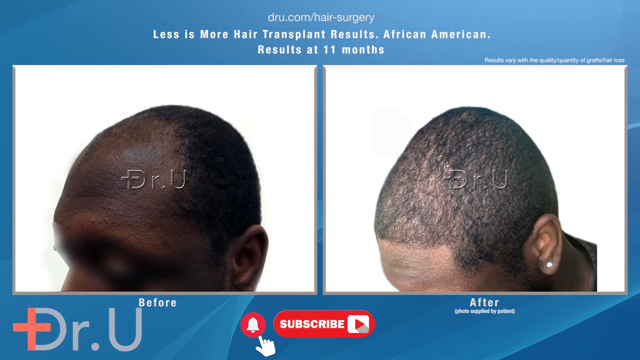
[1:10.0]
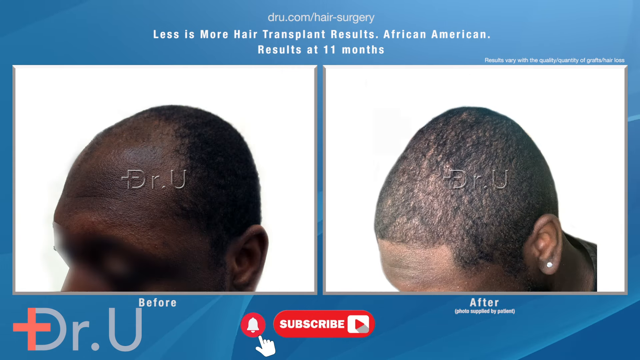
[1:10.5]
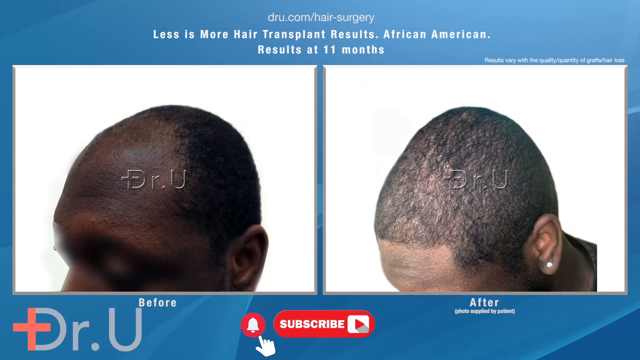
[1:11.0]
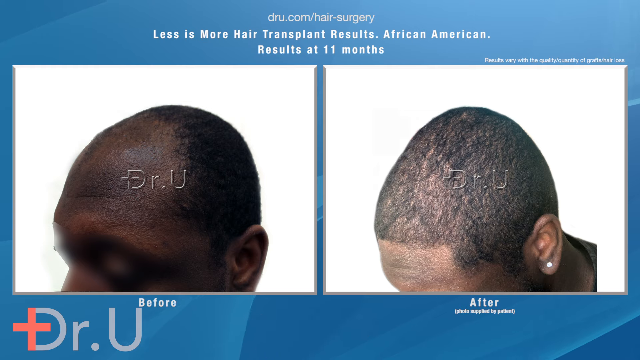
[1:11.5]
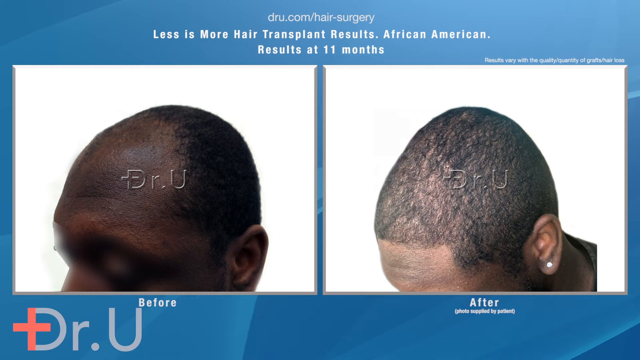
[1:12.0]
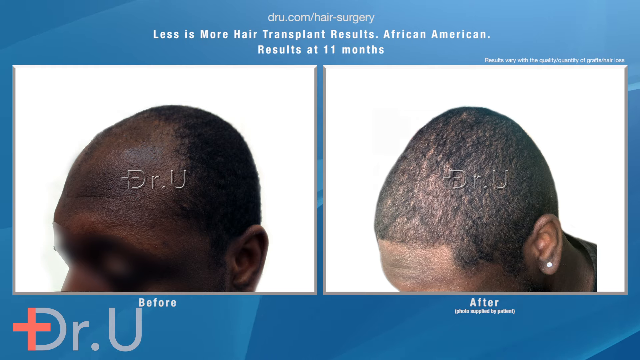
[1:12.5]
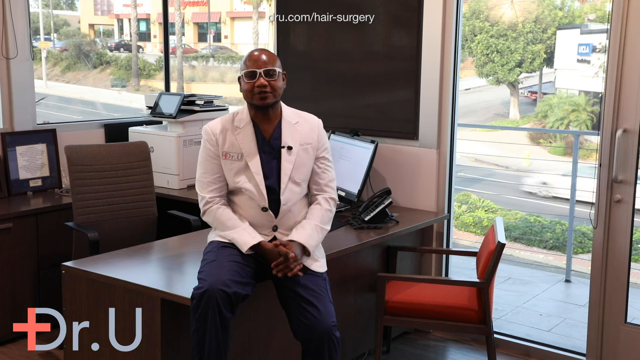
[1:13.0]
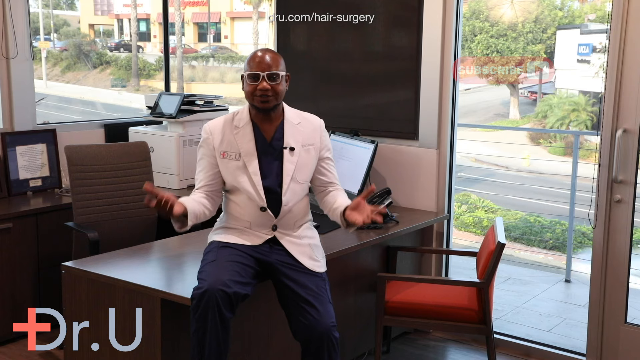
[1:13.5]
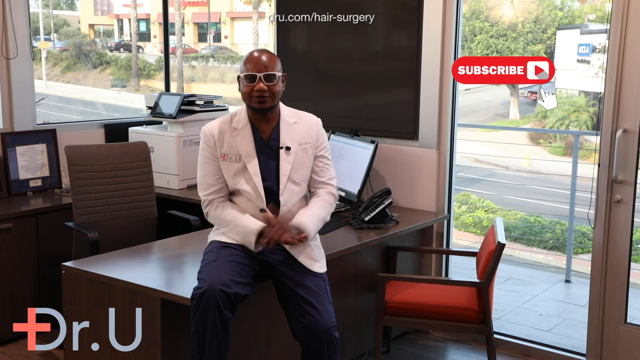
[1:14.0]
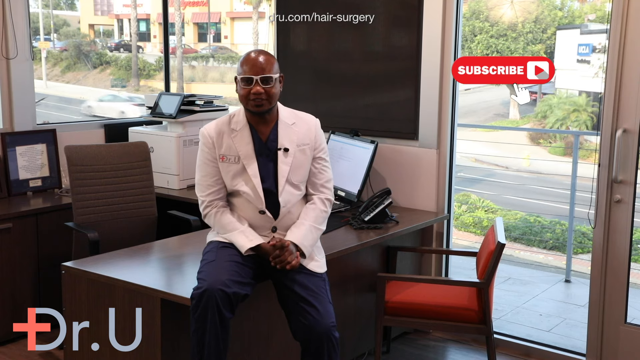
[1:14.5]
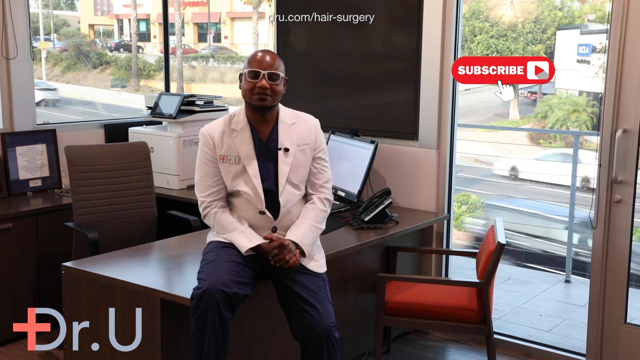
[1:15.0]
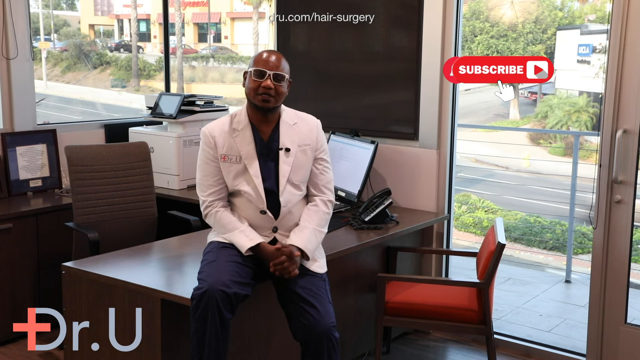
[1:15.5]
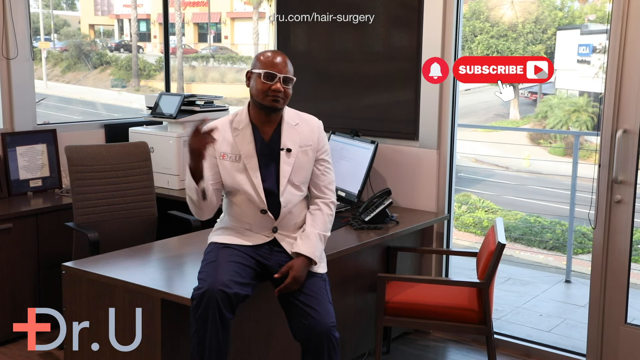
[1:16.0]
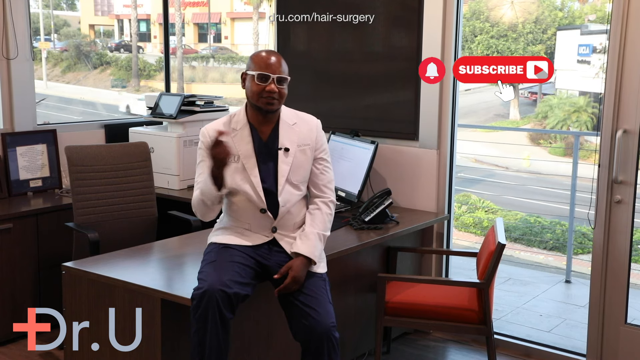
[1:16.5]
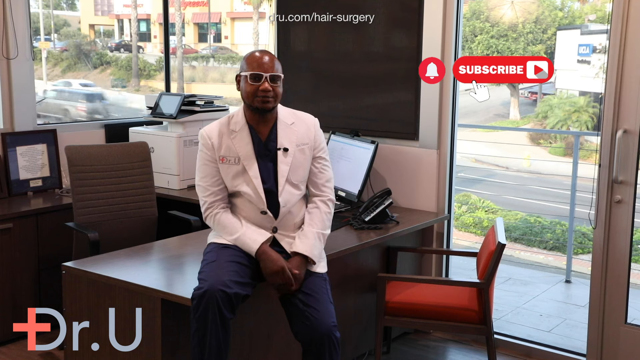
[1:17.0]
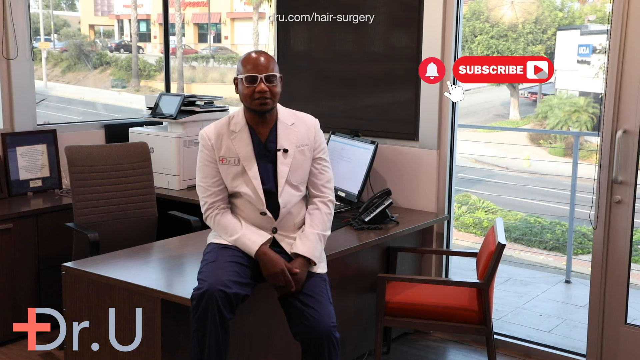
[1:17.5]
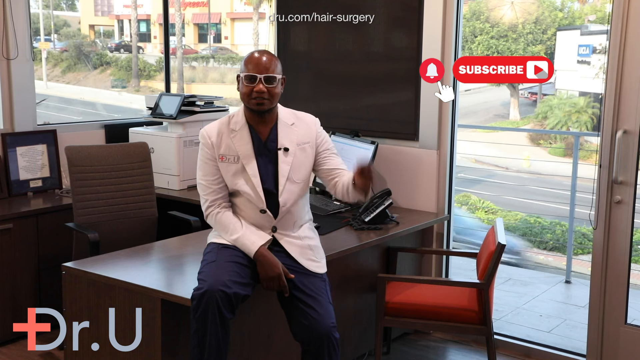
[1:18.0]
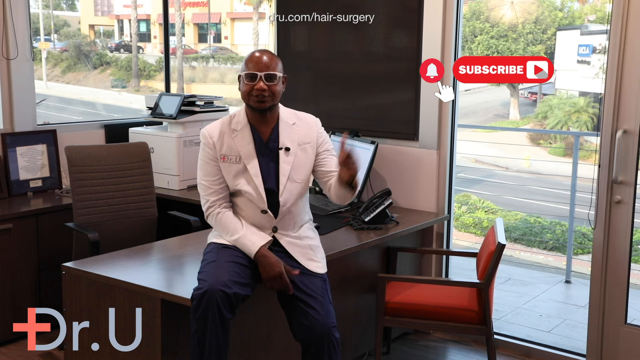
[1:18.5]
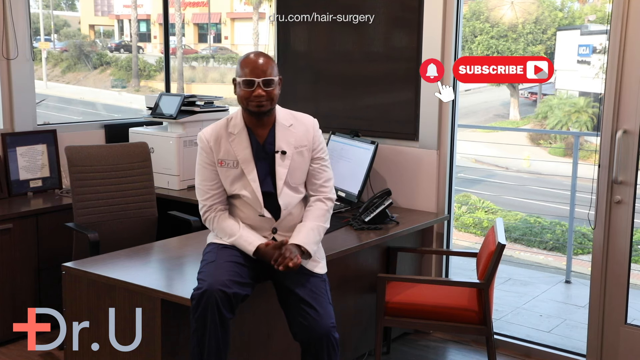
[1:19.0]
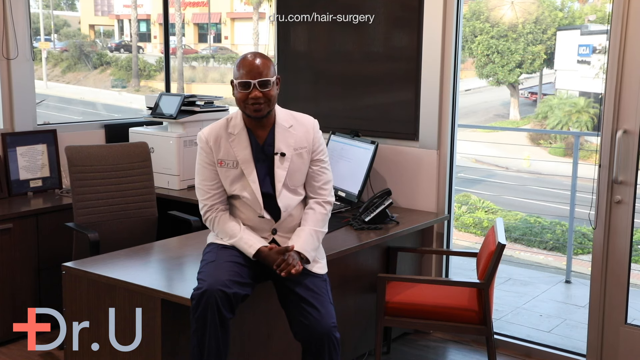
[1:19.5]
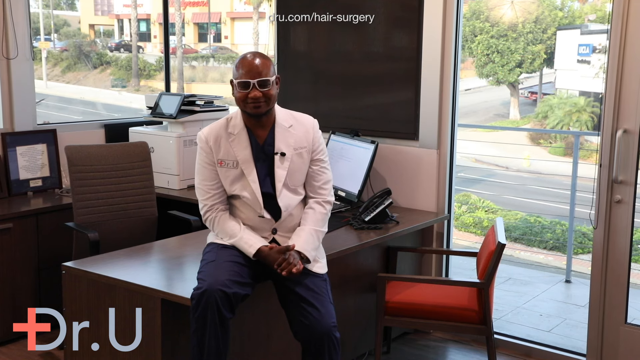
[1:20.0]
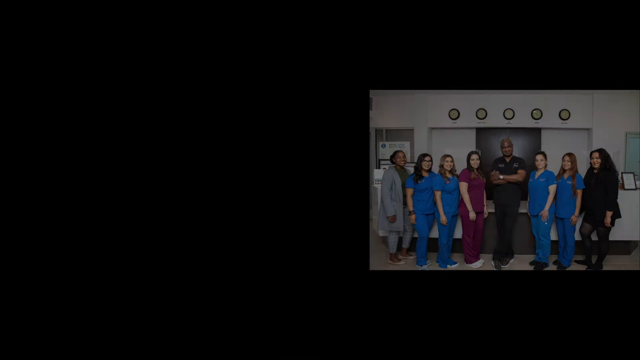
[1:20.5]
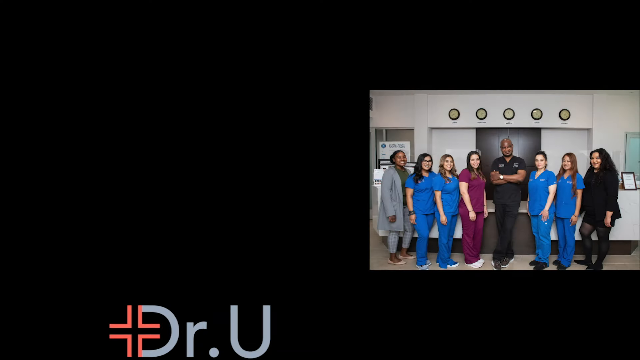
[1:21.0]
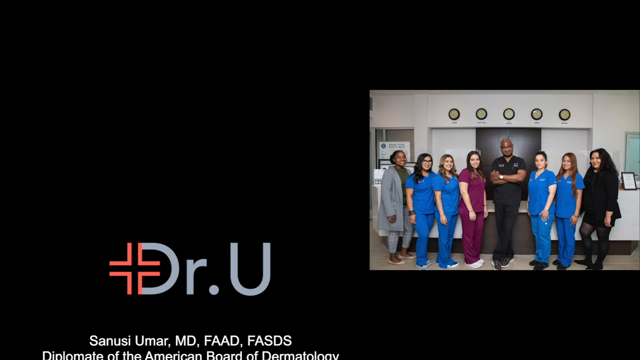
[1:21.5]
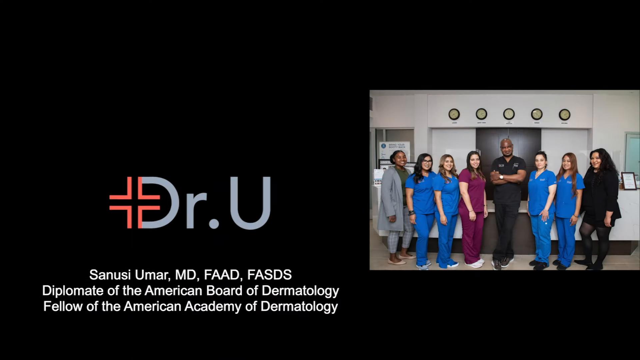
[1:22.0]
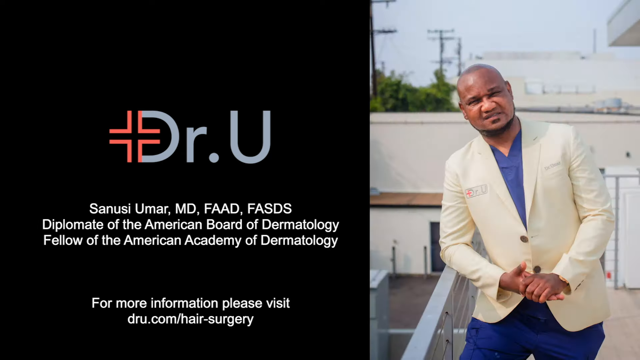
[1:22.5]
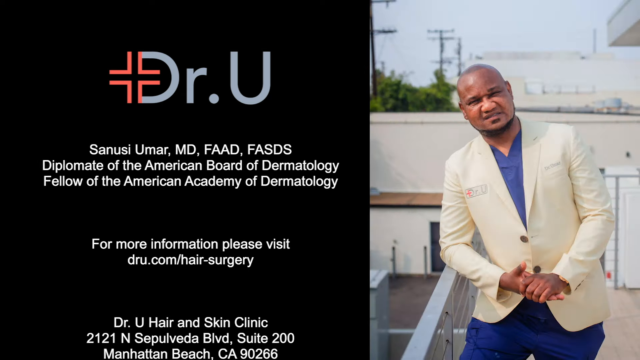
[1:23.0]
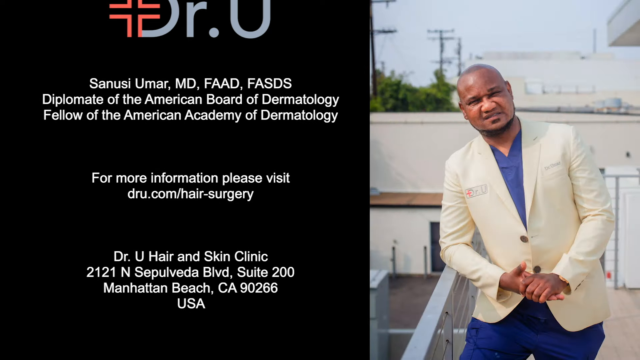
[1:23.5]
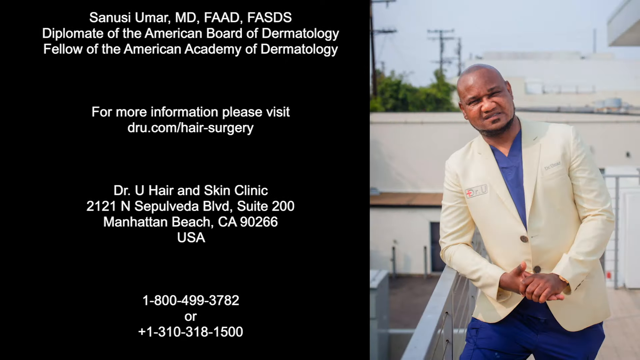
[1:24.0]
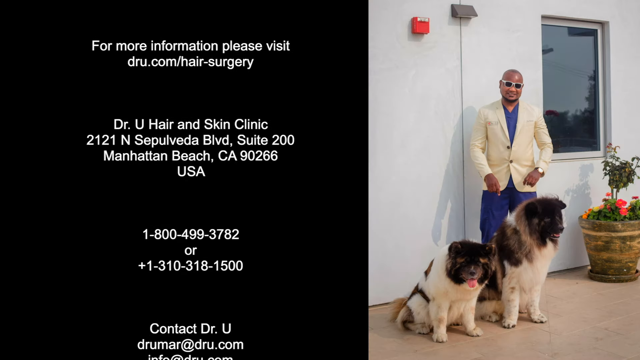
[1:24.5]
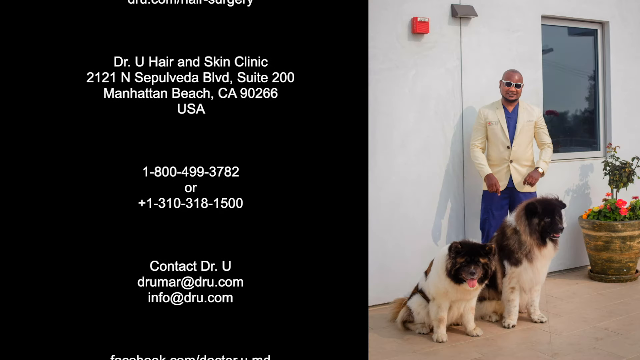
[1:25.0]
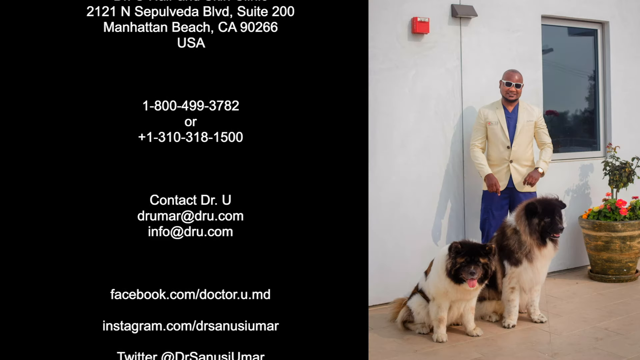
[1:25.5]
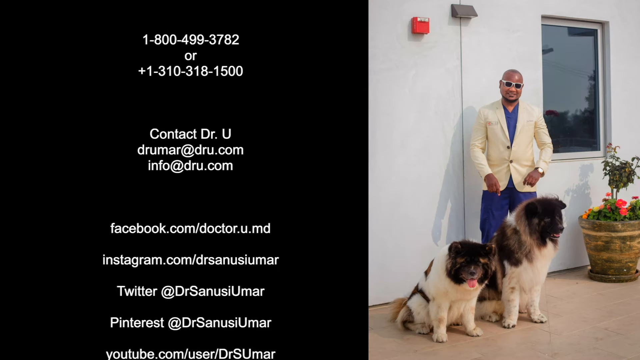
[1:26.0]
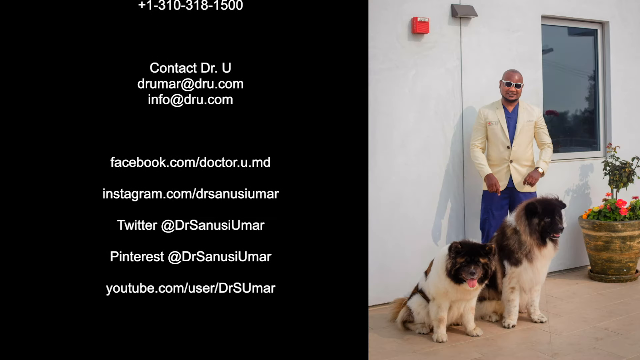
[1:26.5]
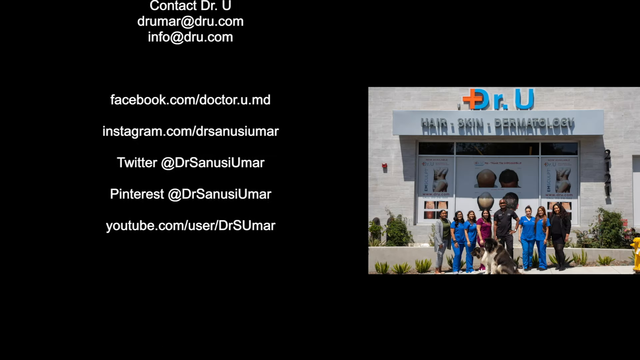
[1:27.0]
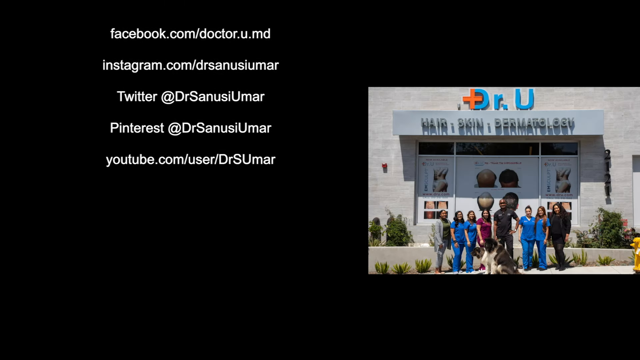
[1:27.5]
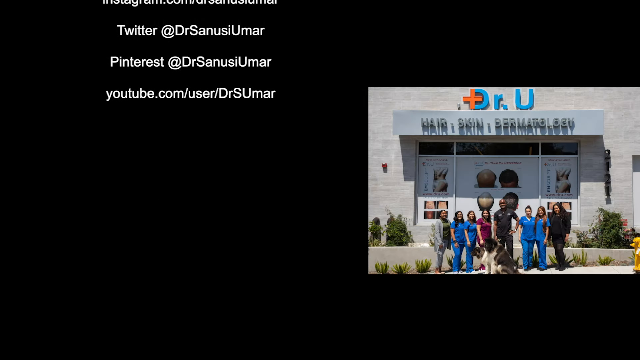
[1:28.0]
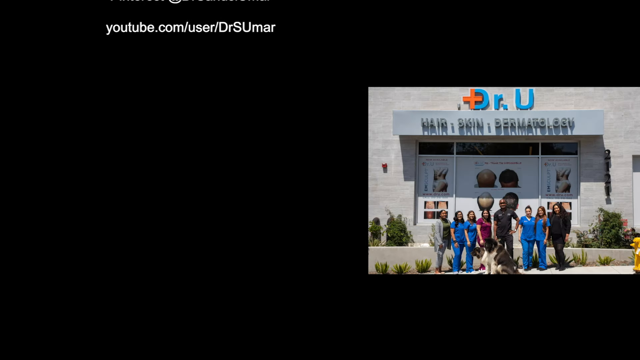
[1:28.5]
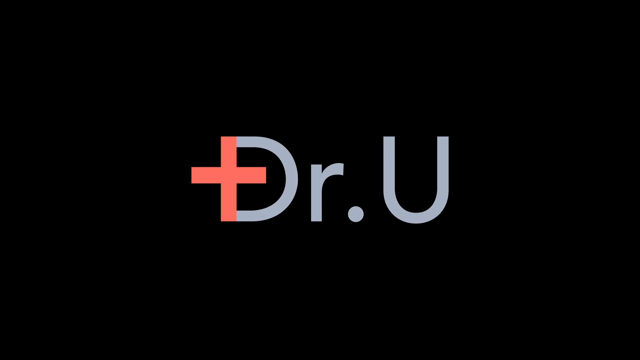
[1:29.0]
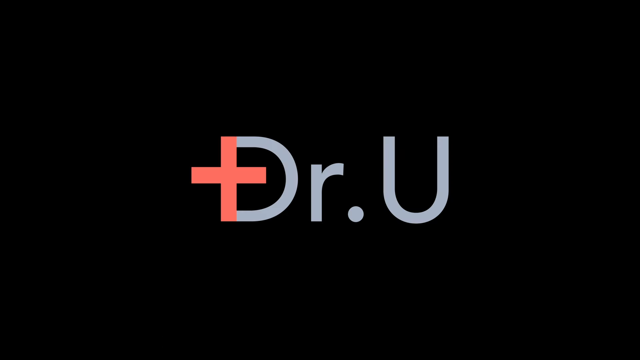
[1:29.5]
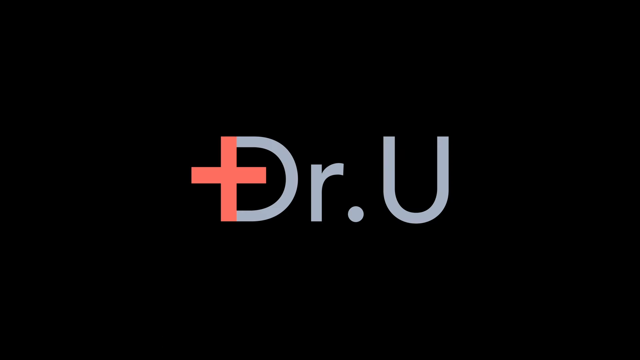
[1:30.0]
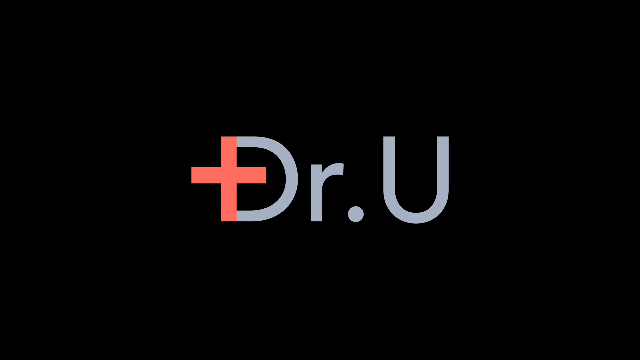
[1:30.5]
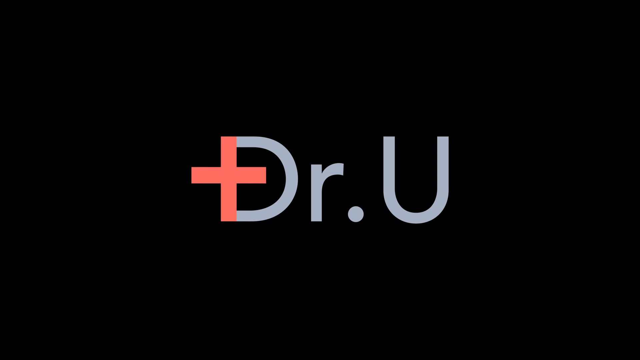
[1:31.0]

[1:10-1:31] A screen shows before and after photos of a man's scalp following a hair transplant, with text above reading "Less is More Hair Transplant Results. African-American. Results at 11 months." After this screen disappears, a video shows a man sitting on the edge of a wooden desk in an office. He wears a white coat that says "Dr. U" on the right side and white-rimmed glasses, and he speaks to the camera and gestures. Behind him is office equipment such as a computer and a printer. Windows and glass doors surround the desk, and through them buildings are visible outside, with cars passing on a street below. As he gestures, a subscribe button and notification bell appear on the right side of the screen. This fades to a photograph of him in surgical scrubs surrounded by women also wearing surgical scrubs, while his name and credentials appear on the left side of the screen: "Dr. U, Sanusi Umar, MD, FAAD, FASDS, Diplomate of the American Board of Dermatology, Fellow of the American Academy of Dermatology." As this scrolls up from the bottom, his contact information in Manhattan Beach, California and his social media addresses appear, while a series of photos of his practice appear in an inset photo box on the right.